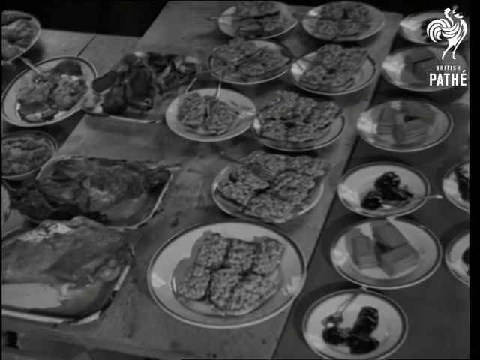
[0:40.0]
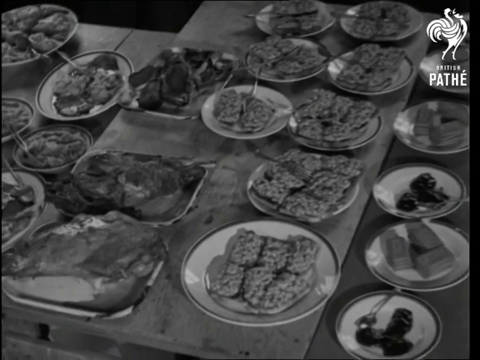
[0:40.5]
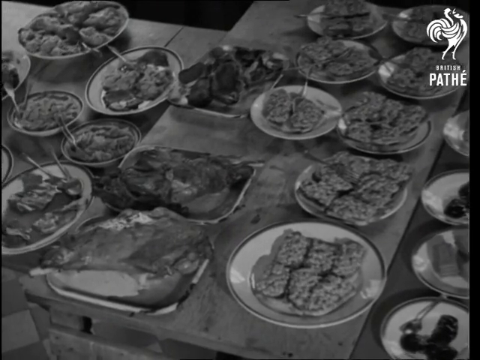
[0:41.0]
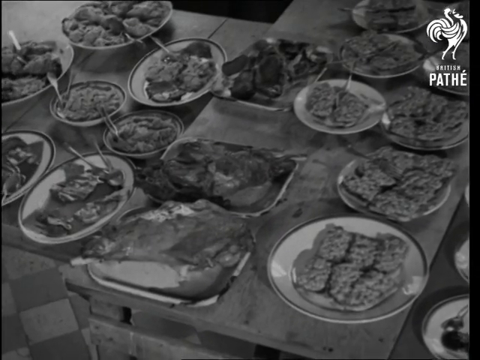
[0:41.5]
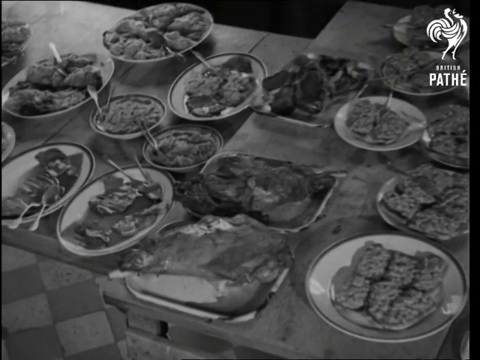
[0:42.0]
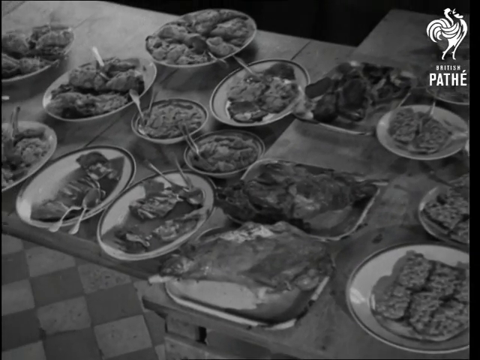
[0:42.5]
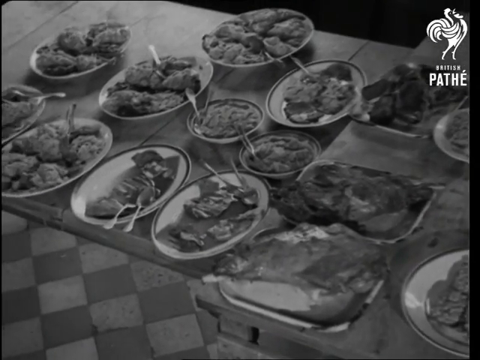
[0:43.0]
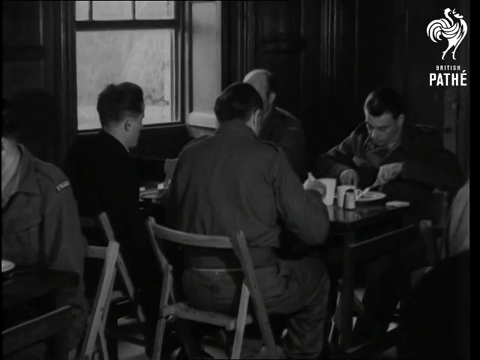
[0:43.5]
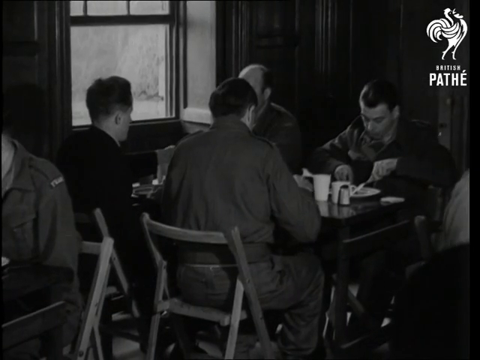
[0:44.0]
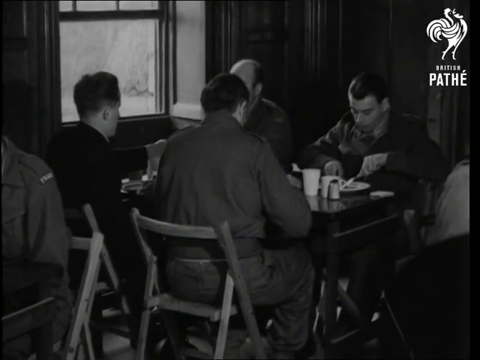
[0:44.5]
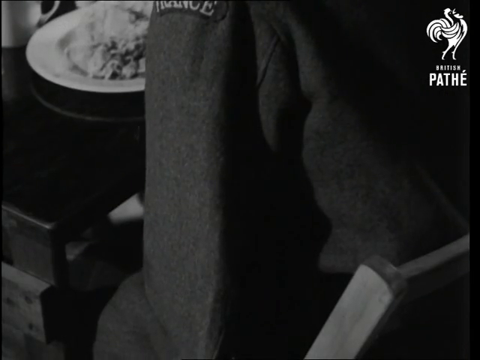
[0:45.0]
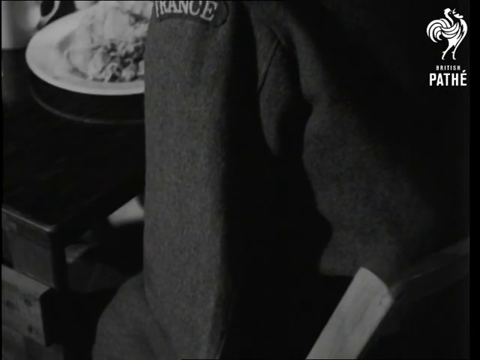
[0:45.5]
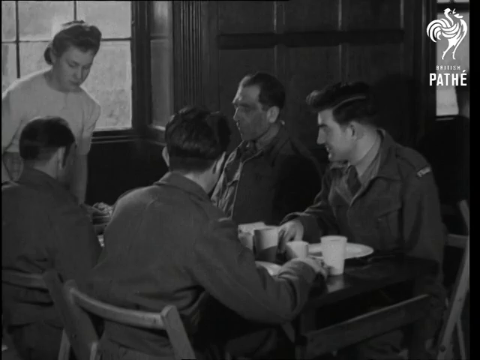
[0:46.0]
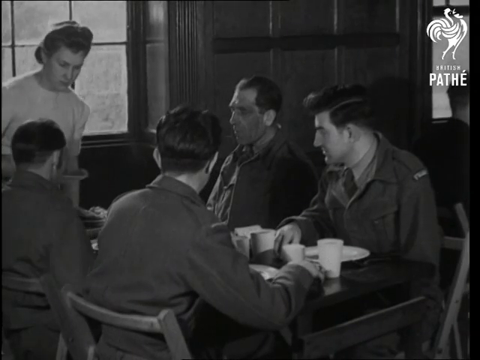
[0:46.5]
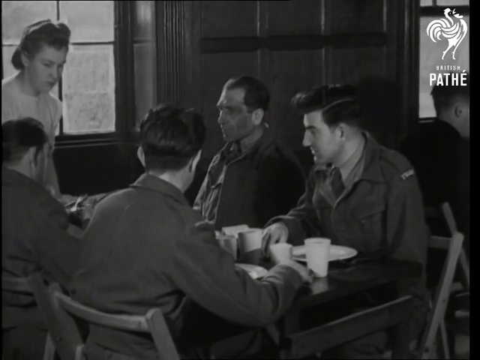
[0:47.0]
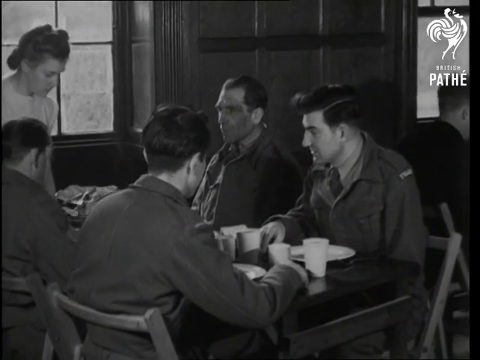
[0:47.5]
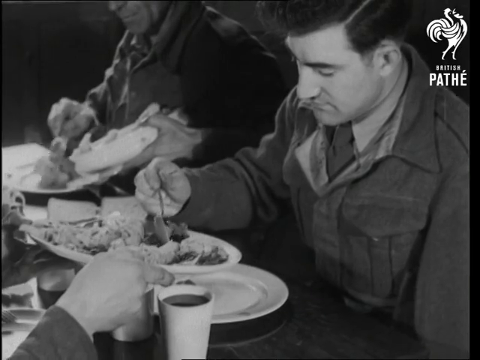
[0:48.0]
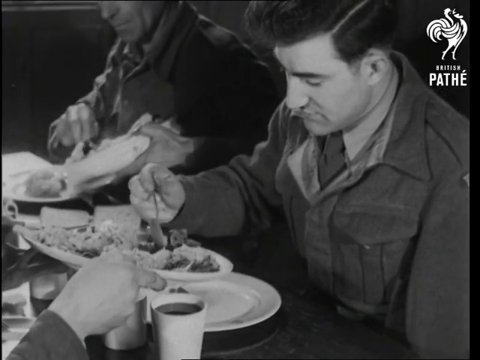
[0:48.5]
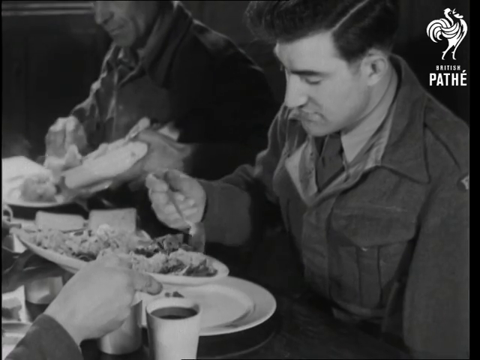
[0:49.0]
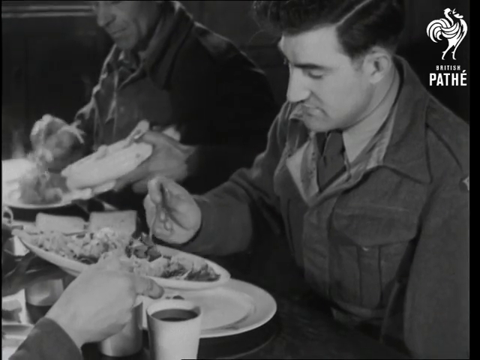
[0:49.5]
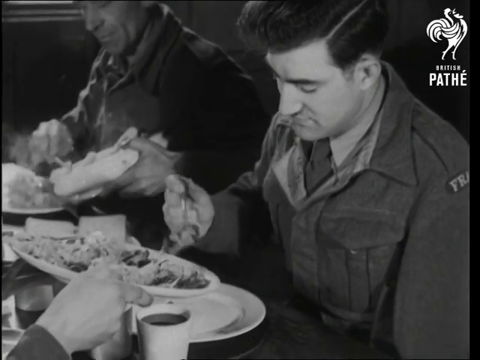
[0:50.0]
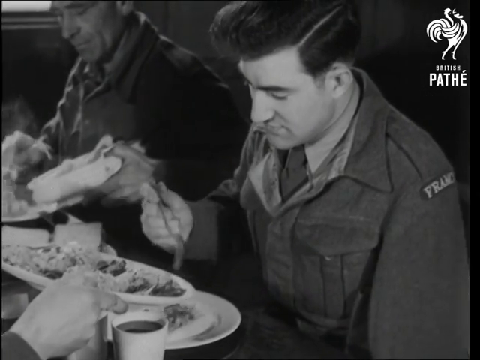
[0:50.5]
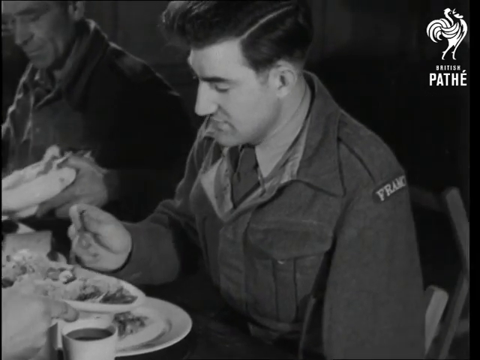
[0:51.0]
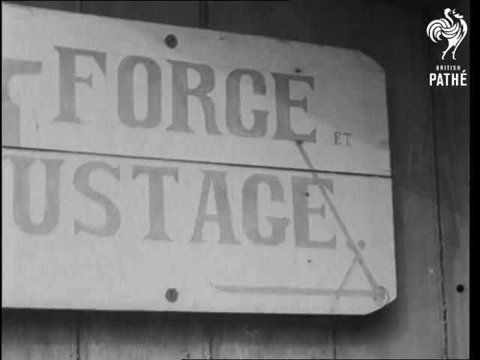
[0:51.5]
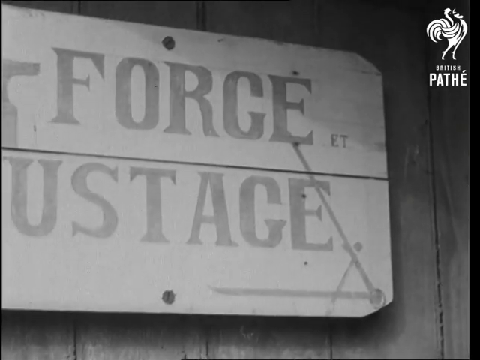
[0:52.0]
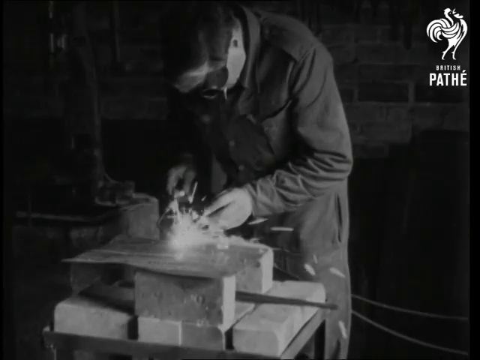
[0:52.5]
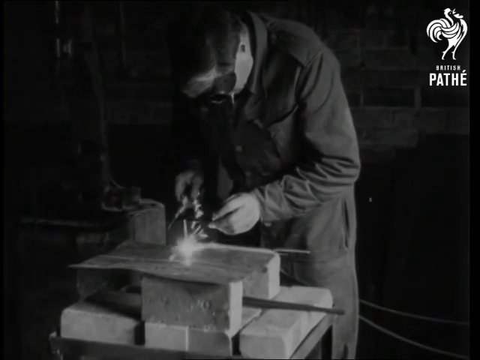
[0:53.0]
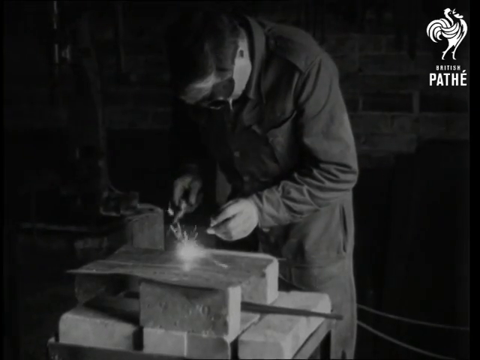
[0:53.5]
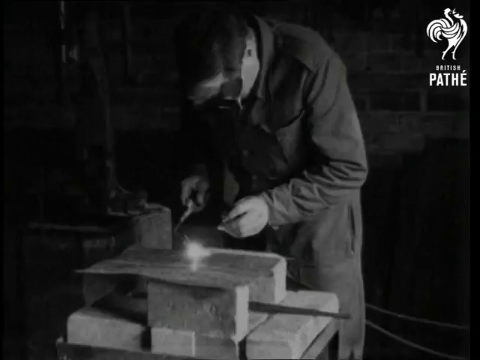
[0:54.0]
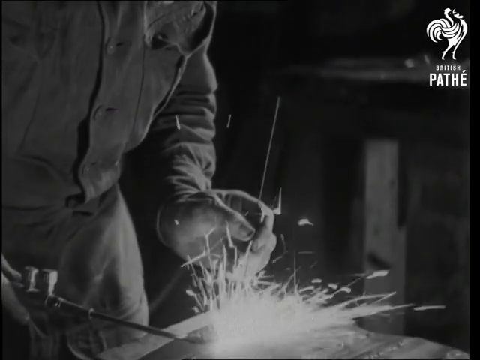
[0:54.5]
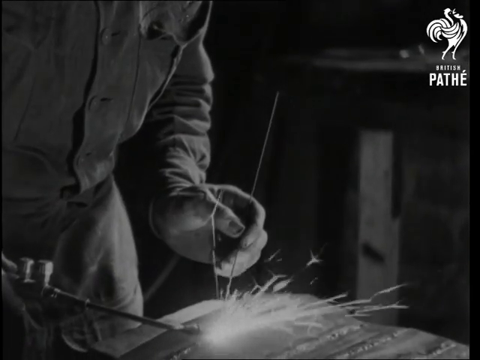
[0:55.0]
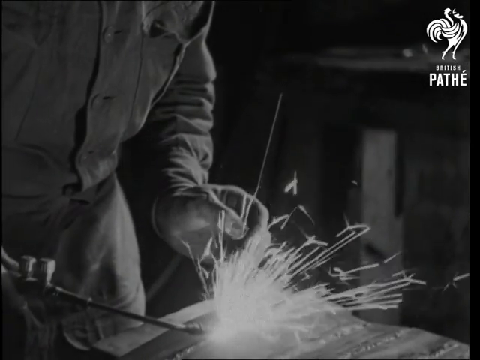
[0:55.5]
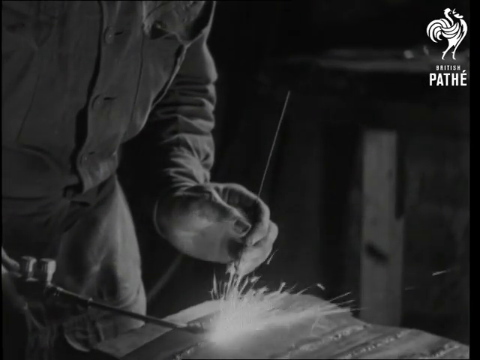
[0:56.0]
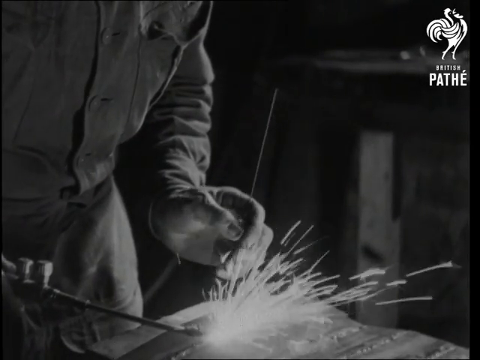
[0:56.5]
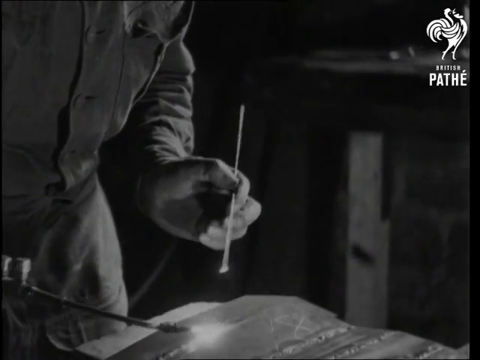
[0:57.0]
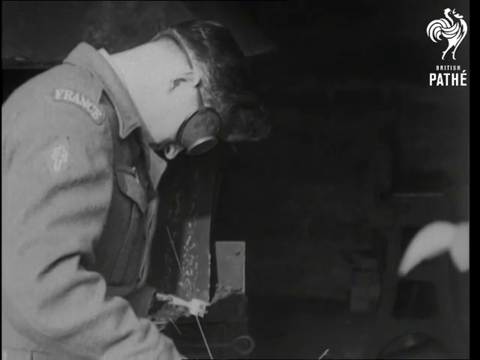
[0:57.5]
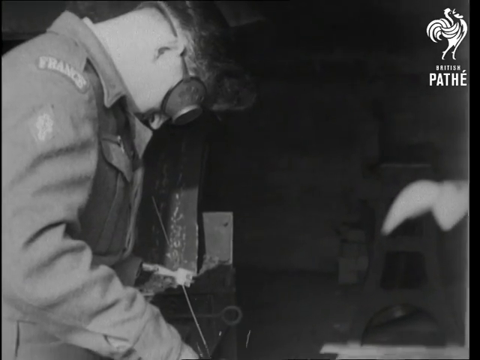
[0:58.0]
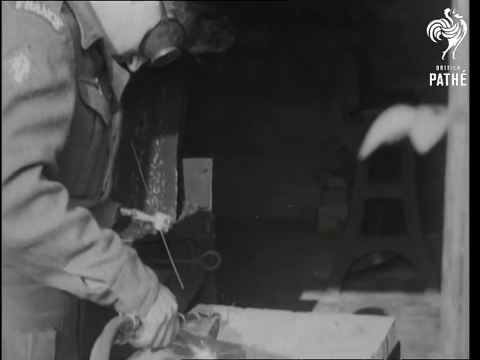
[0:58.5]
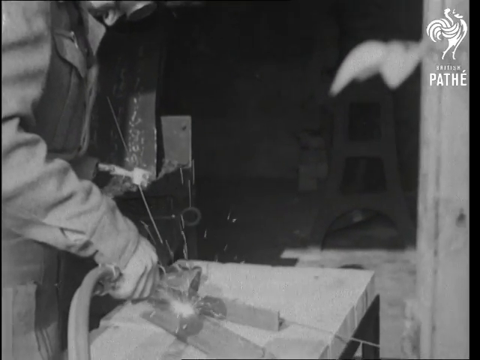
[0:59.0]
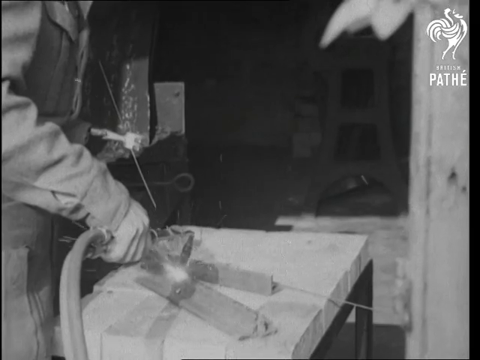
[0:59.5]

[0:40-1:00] Different foods on plates cover a large table, and the camera pans from right to left across the plates, all of which have utensils on them. A table of four people eating follows; they are focused on their food and do not appear to be speaking. A zoomed-in shot shows the same "France" coat seen earlier, and then the camera zooms out to reveal the man wearing the coat along with three other people eating at a table. They appear to interact with a waitress before continuing to eat and place food onto their plates. Next, a blacksmith works in his shop wearing goggles and safety gear, and he is shown from a different angle, again working in his shop. He looks to be welding something.